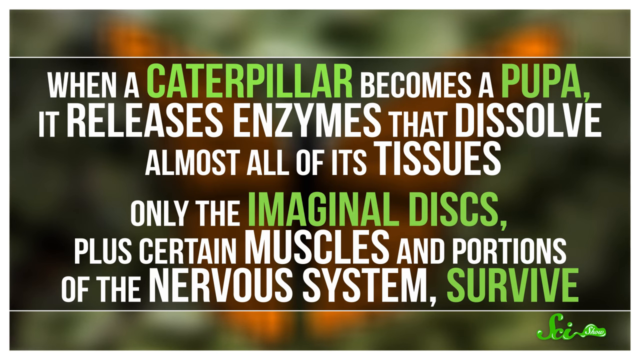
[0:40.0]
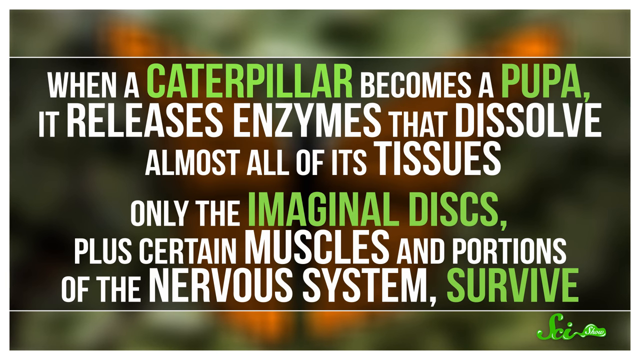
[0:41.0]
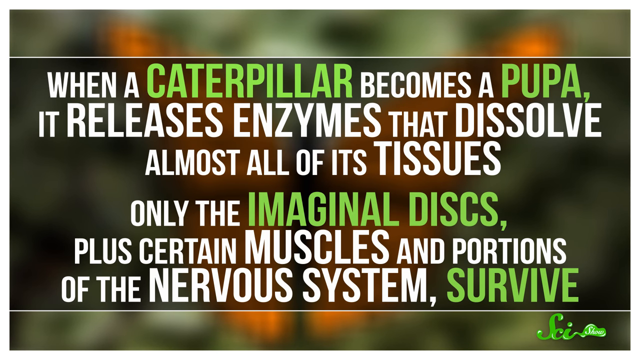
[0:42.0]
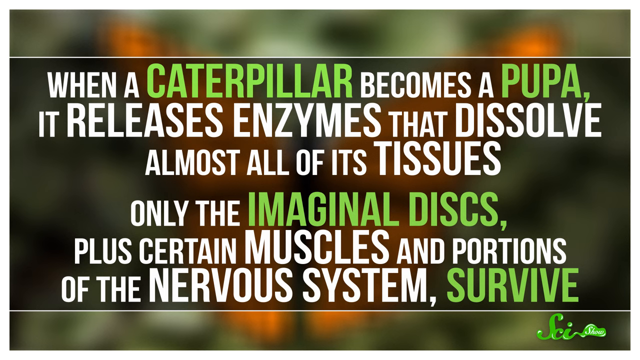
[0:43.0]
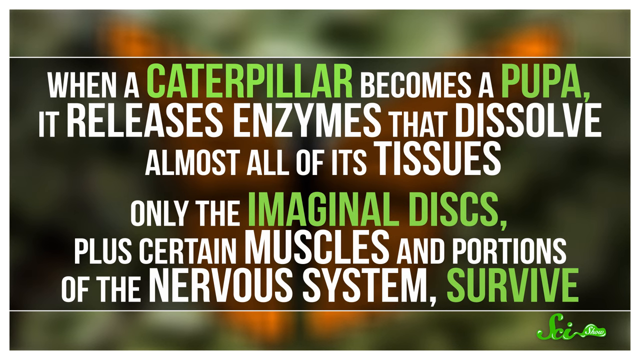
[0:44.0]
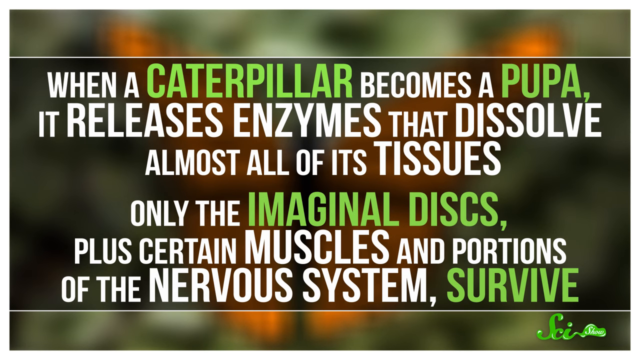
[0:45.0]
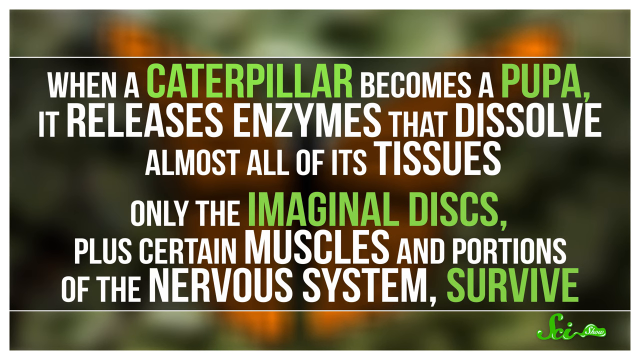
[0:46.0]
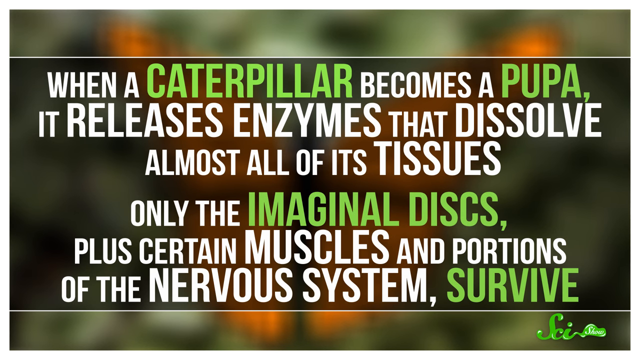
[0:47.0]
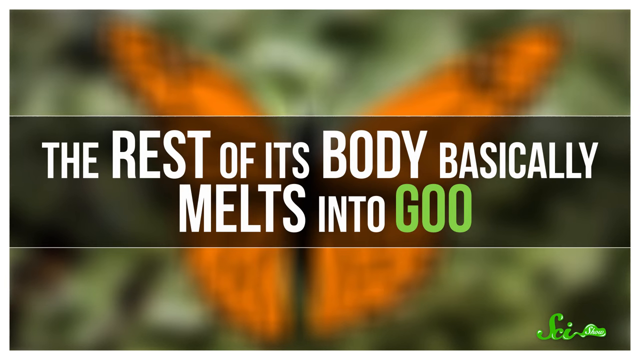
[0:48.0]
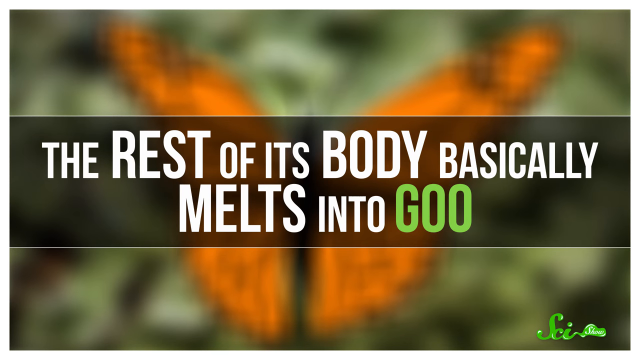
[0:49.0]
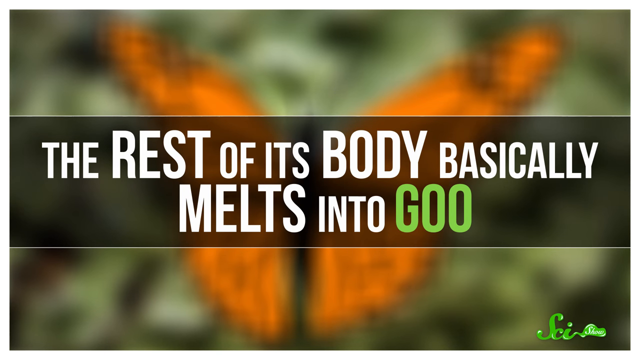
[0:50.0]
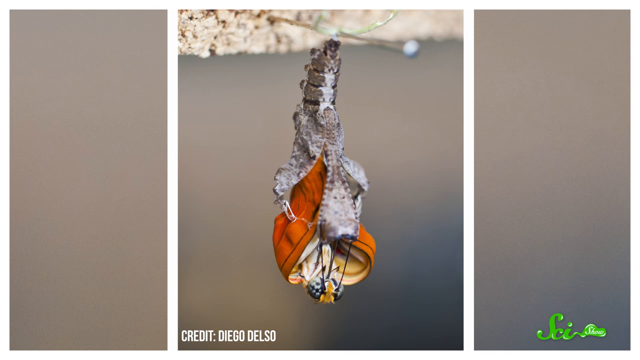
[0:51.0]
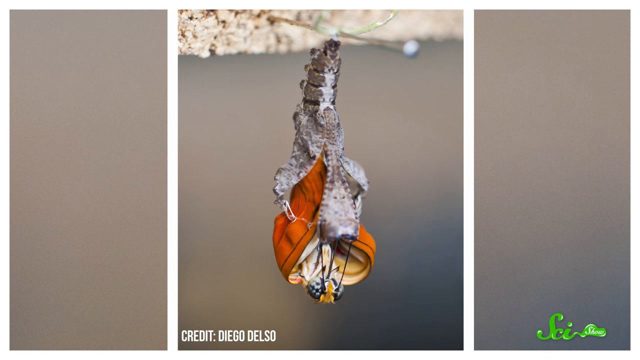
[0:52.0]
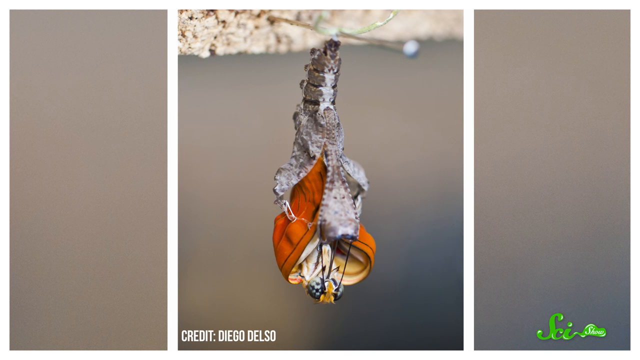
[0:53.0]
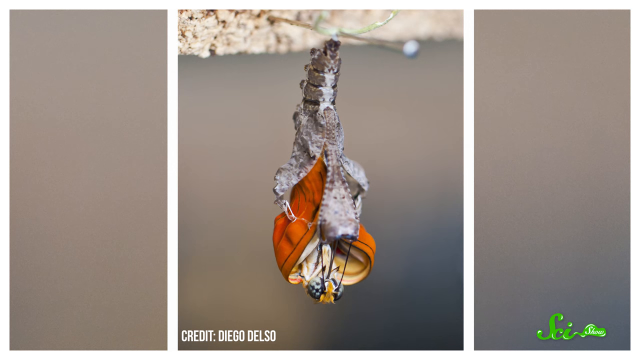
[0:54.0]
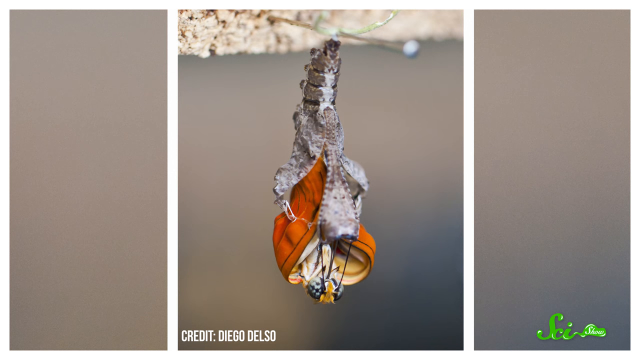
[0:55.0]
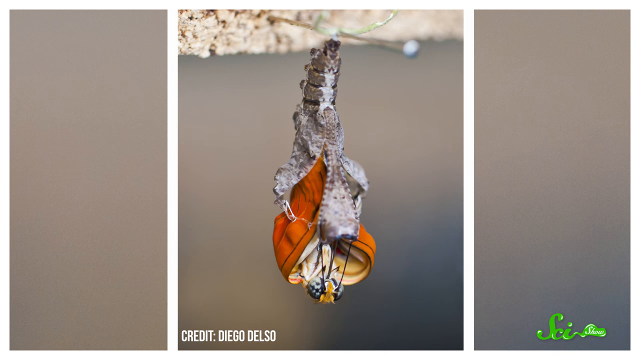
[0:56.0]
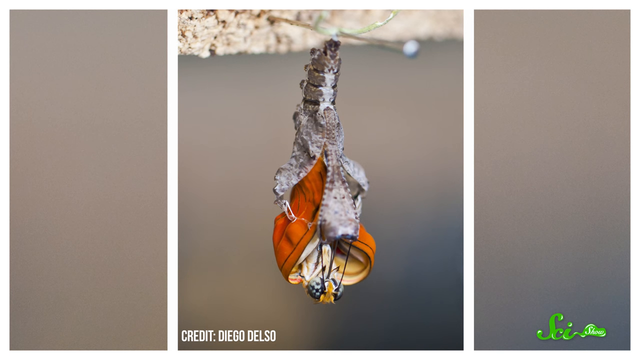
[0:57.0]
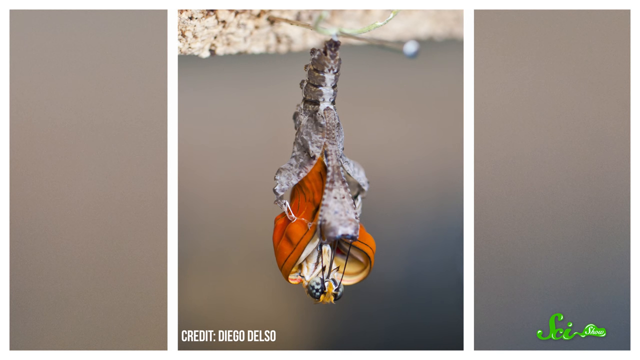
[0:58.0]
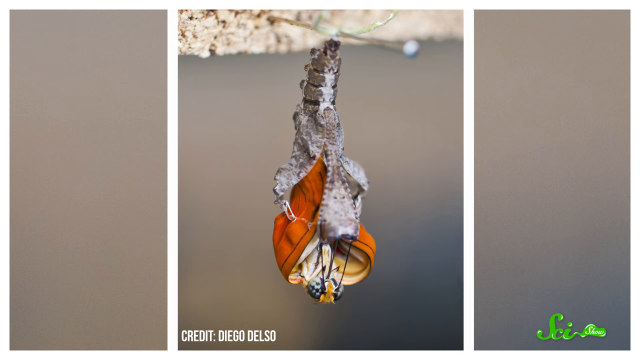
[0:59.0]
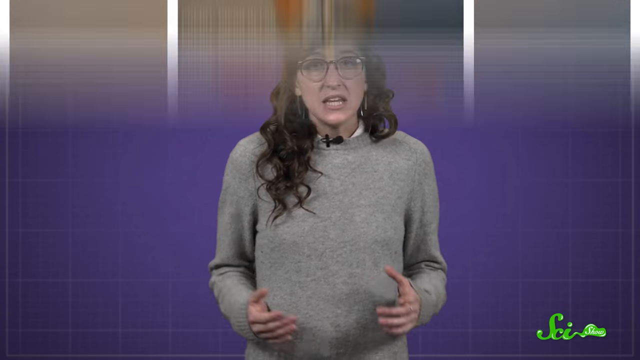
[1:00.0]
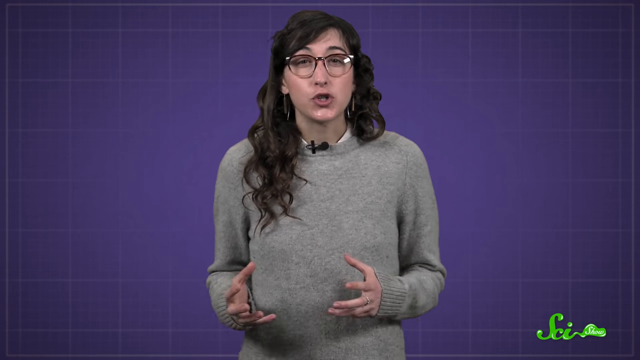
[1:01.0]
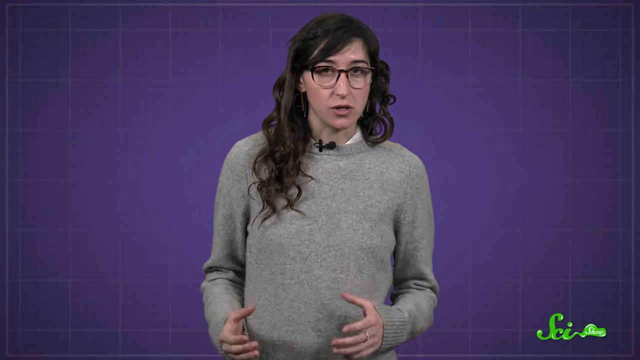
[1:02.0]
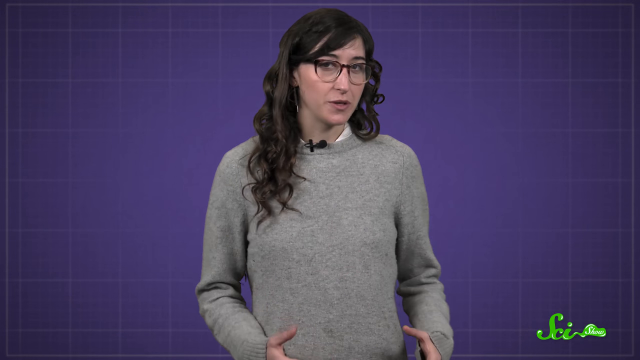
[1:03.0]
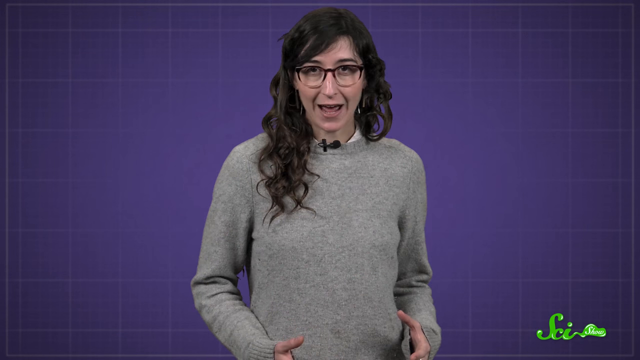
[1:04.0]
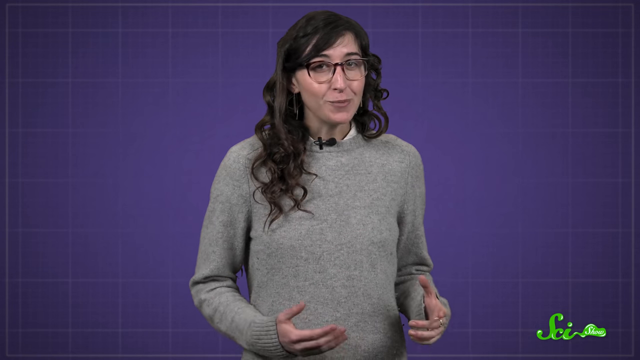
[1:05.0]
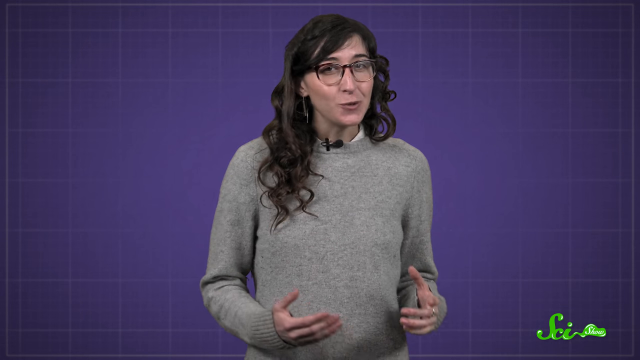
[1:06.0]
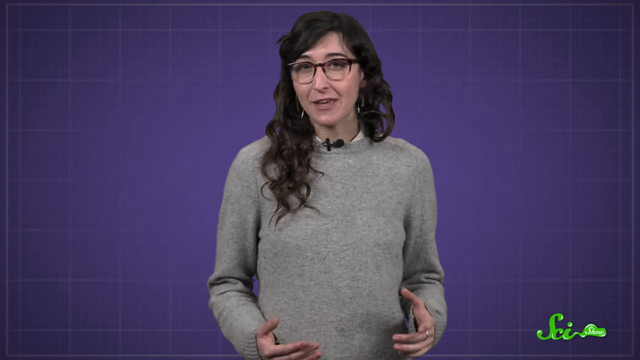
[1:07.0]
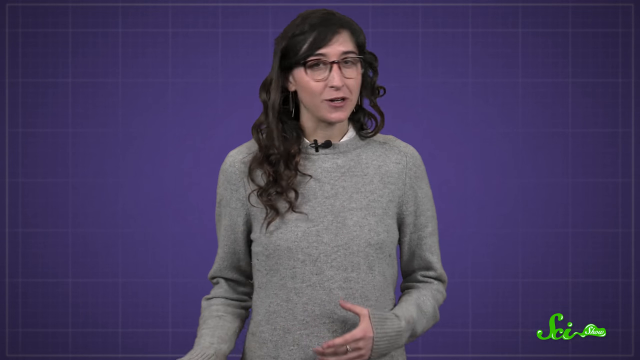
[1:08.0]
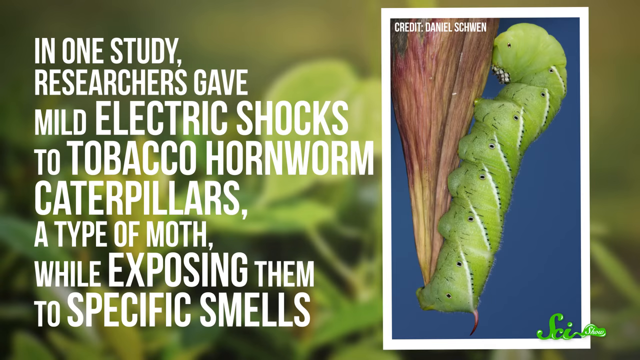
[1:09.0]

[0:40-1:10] The sentence "when a caterpillar becomes a pupa, it releases enzymes that dissolve almost all of its tissues. Only the imaginal discs plus certain muscles and portions of the nervous system survive" is on screen. The woman then appears to be talking again; she says "the rest of the body just melts into goo." The chrysalis is shown, with the body parts that aren't needed kind of going into goo, while the rest has grown and starts to break out of the chrysalis, emerging as a butterfly. The woman continues to talk. Text then reads "in one study, researchers gave mild electric shocks to tobacco hornworm caterpillars, a type of moth, while exposing them to specific smells."